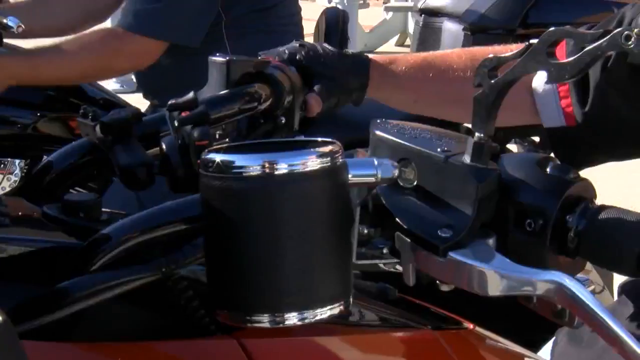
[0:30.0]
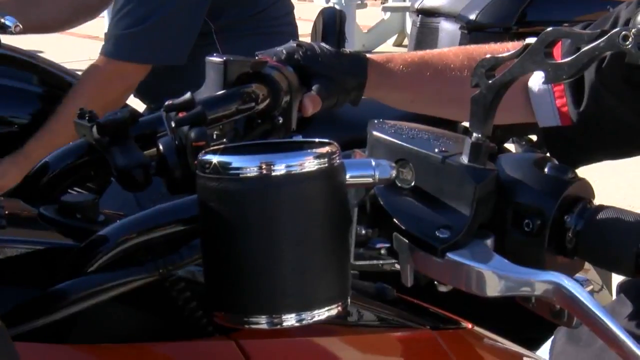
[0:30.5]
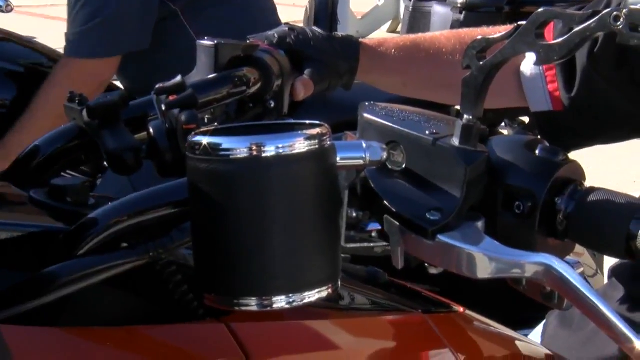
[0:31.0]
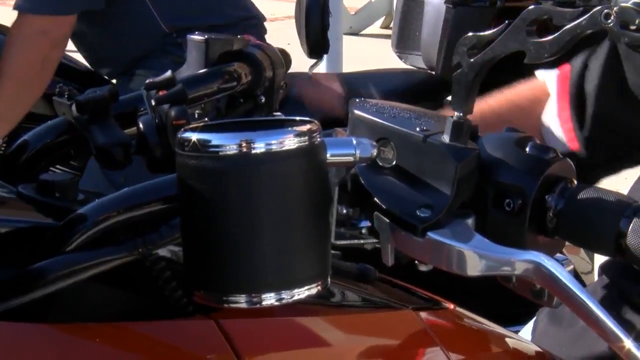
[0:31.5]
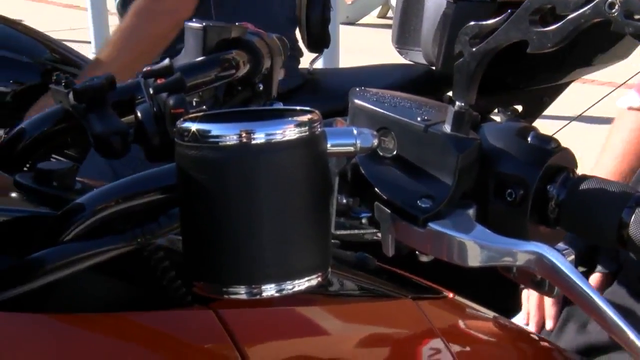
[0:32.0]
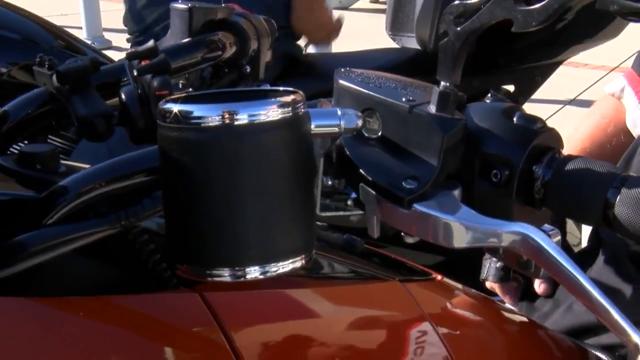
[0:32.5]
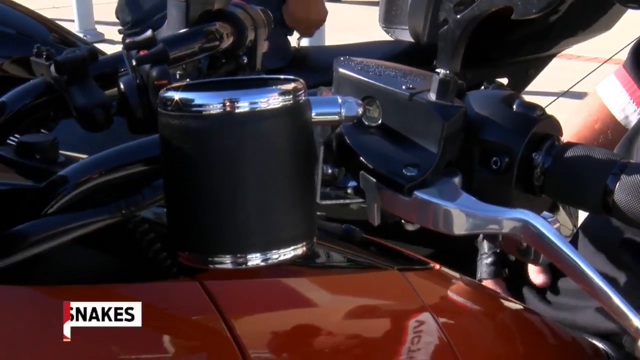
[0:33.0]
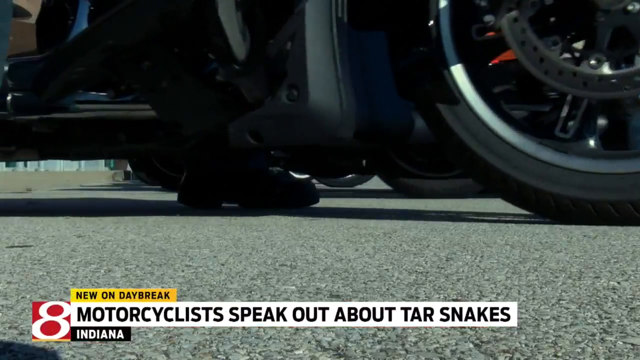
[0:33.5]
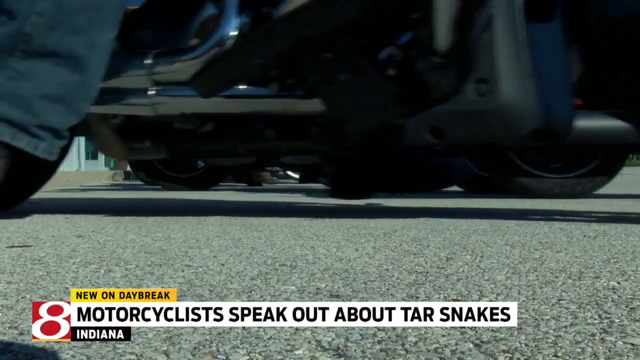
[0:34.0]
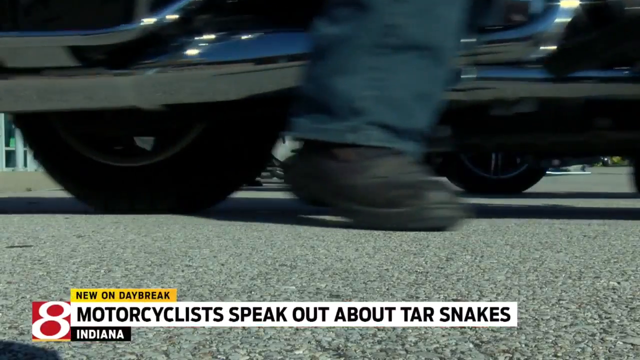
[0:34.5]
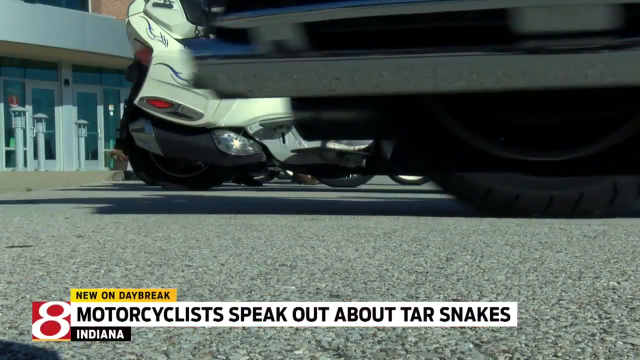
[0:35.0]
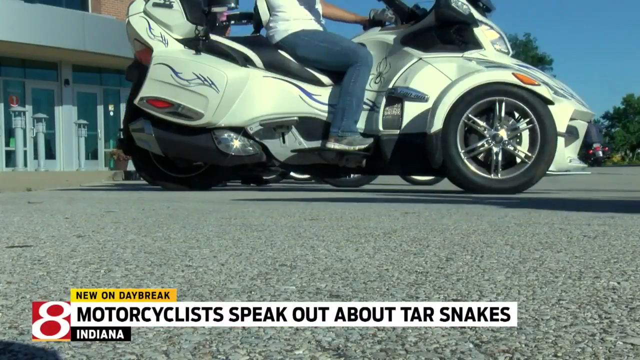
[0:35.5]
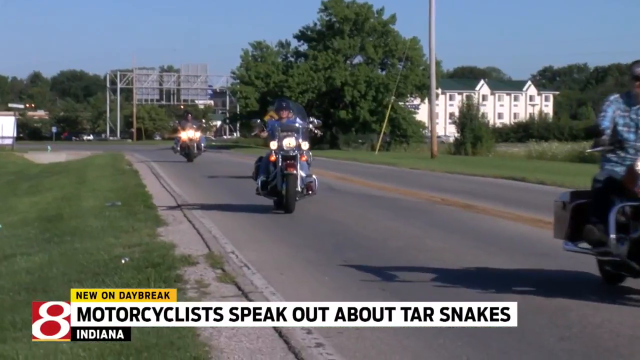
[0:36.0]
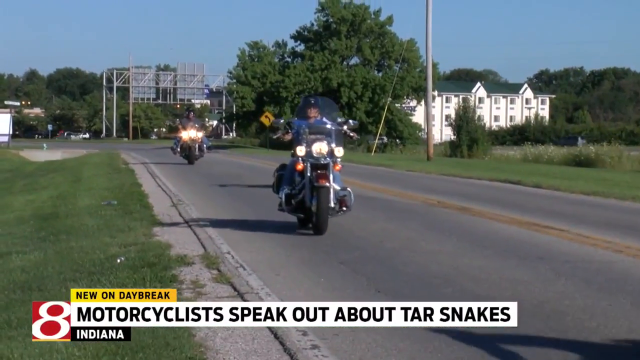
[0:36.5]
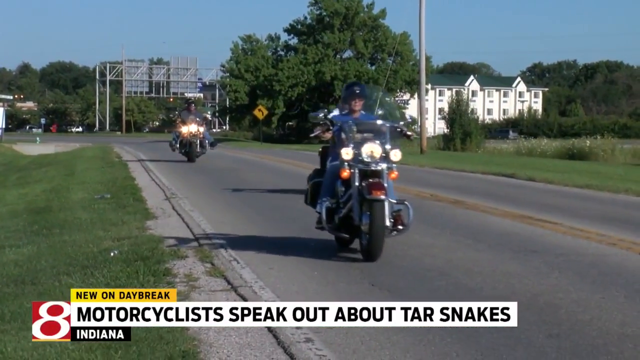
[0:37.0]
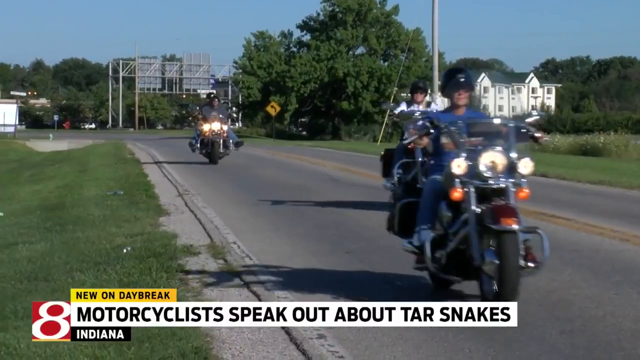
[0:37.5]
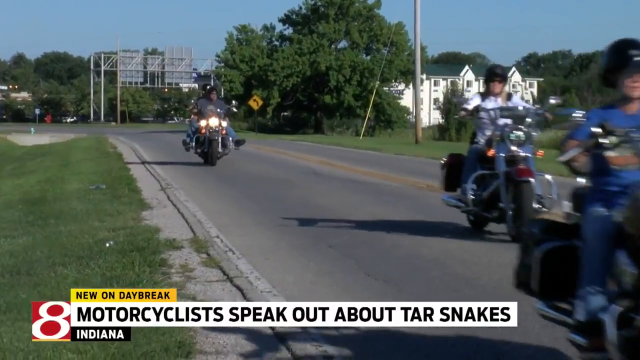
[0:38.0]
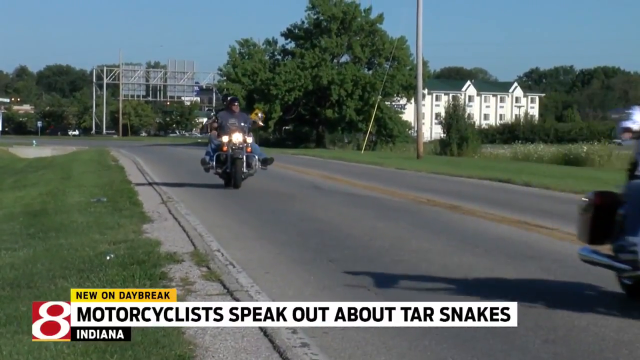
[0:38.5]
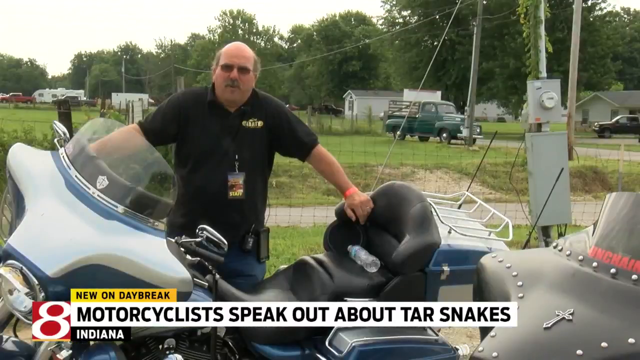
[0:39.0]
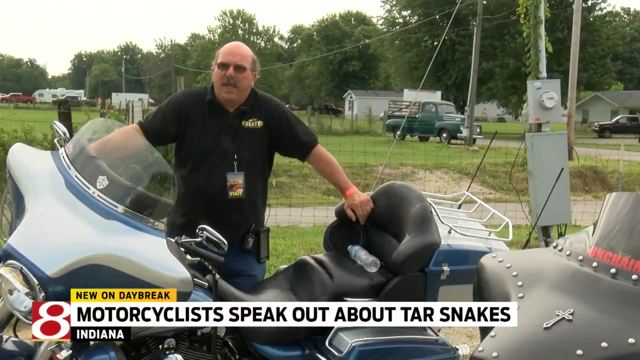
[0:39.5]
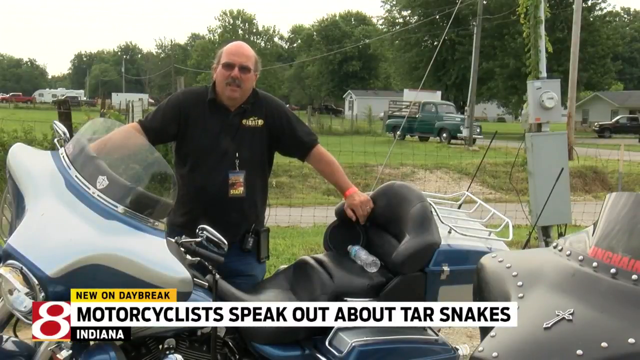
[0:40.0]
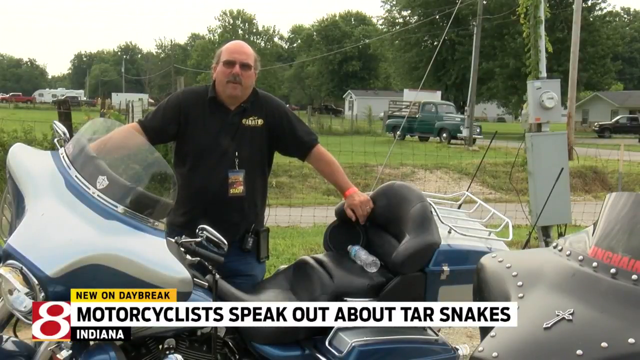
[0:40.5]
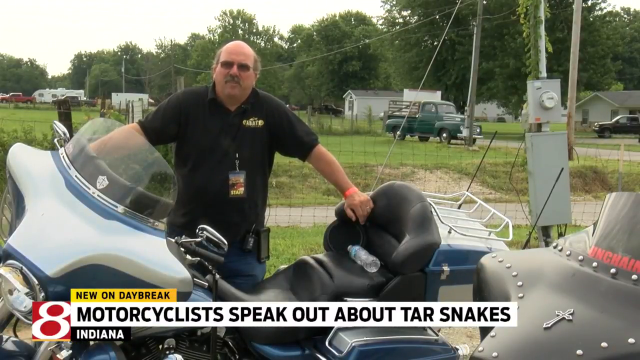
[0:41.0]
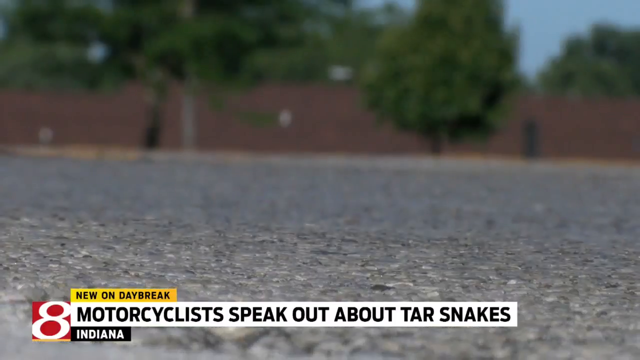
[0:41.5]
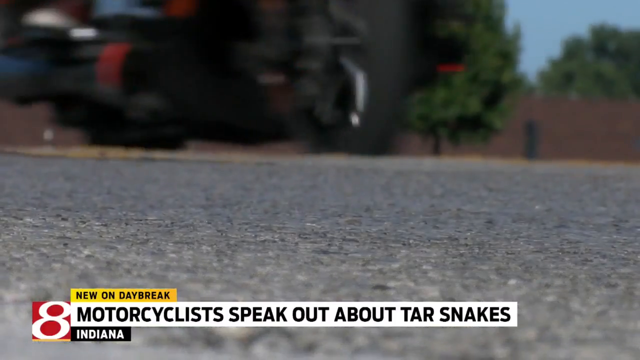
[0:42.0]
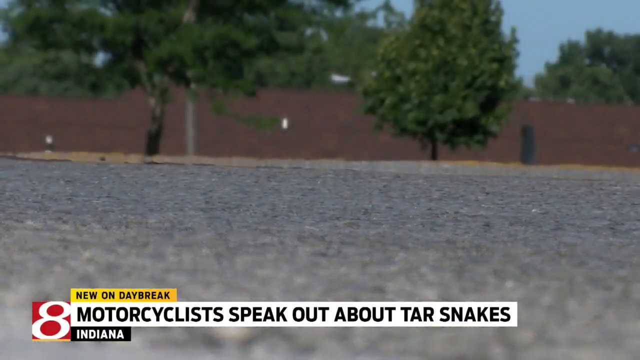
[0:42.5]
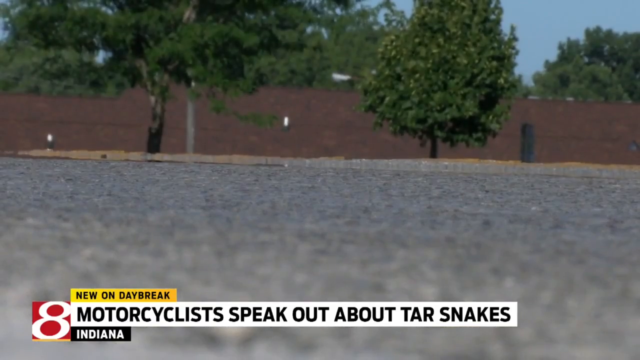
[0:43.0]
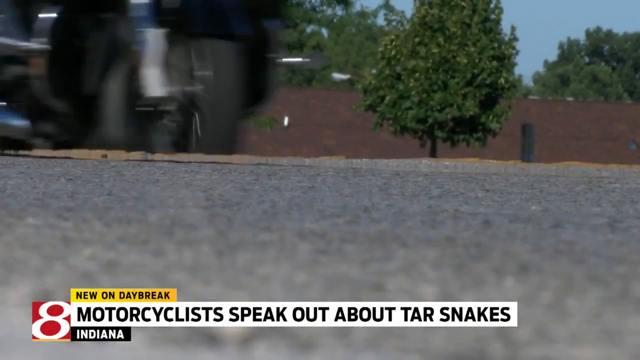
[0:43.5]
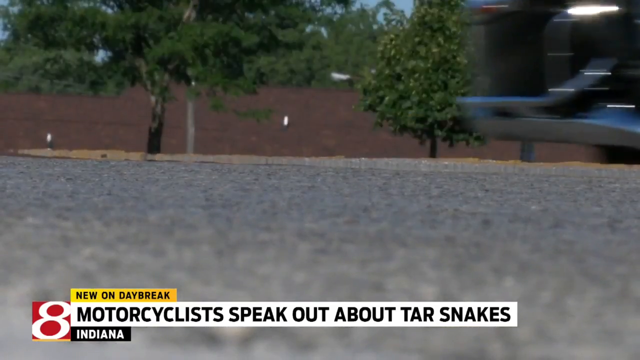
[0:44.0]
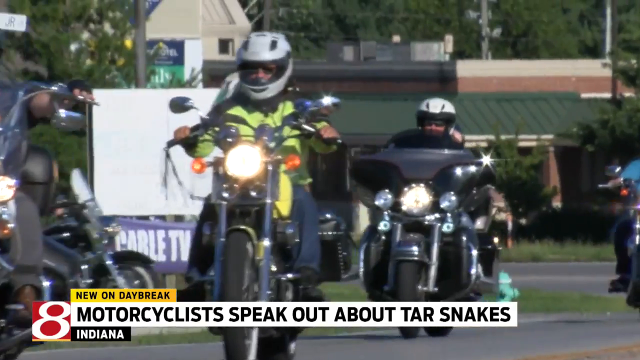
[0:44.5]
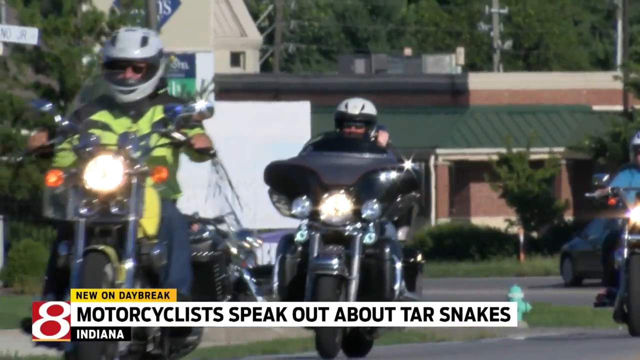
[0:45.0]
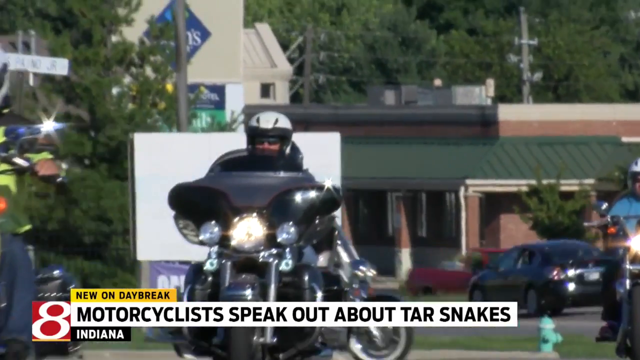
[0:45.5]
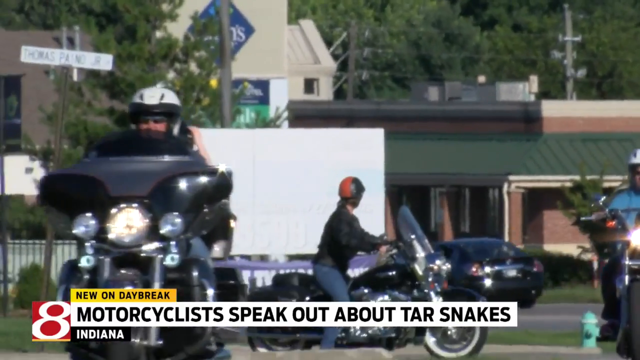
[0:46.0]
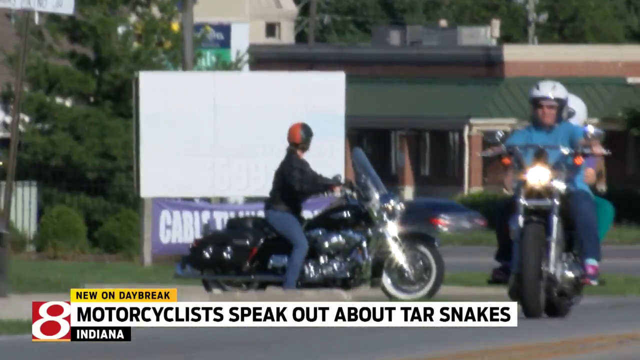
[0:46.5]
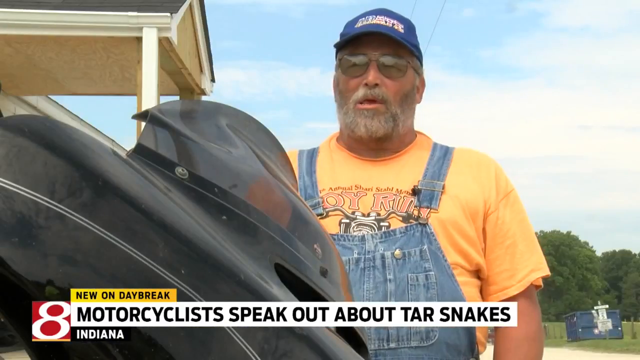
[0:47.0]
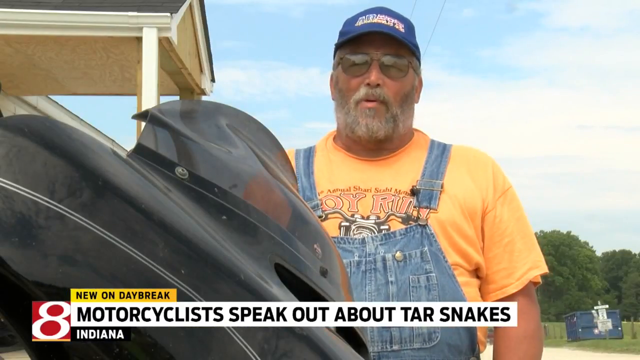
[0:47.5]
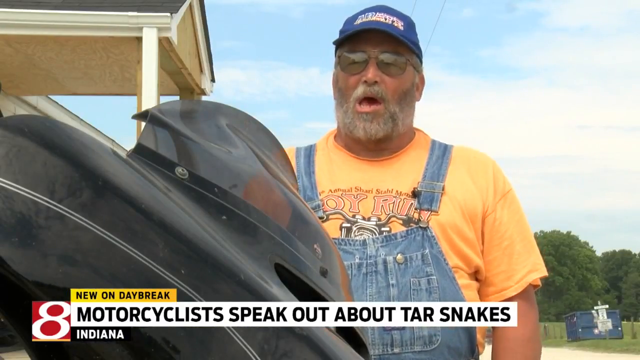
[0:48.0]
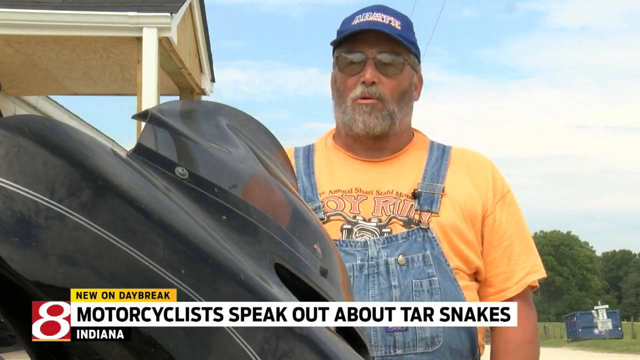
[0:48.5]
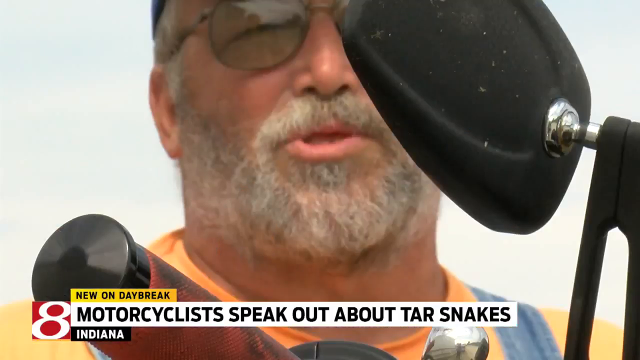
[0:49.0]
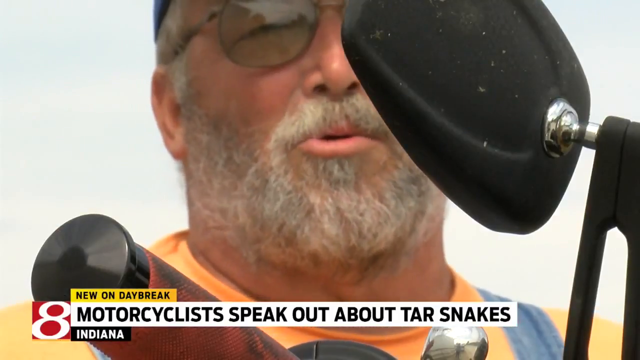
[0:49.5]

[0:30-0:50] A motorcycle decked out in chrome and black is shown. Channel 8 text appears: "new on daybreak" and "motorcyclists speak out about tar snakes," in Indiana. A shot at street level shows a group of motorcycles, probably 7 or 8, moving from left to right. A man in a black shirt holds the back seat of his motorcycle with his left hand and the front end of the bar with his right hand; he is in some type of field. The view is again at street level, right at the street, with motorcycles now moving toward the camera. An older bearded man in his late 60s, wearing overalls and a blue hat, speaks into the camera.